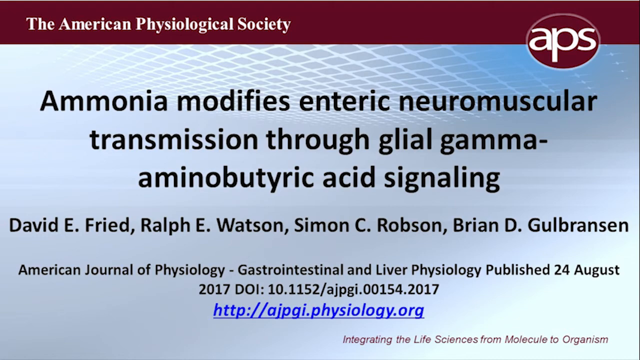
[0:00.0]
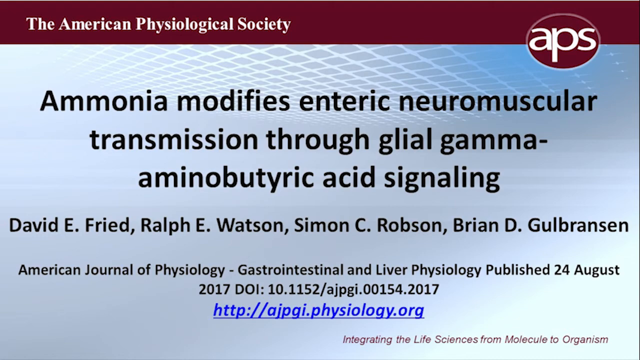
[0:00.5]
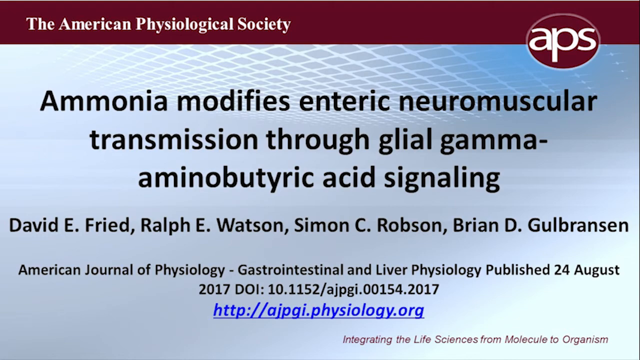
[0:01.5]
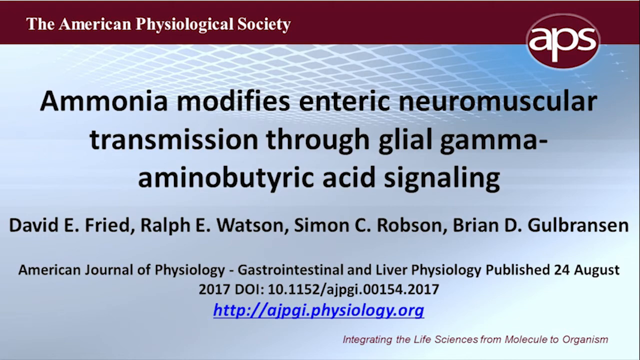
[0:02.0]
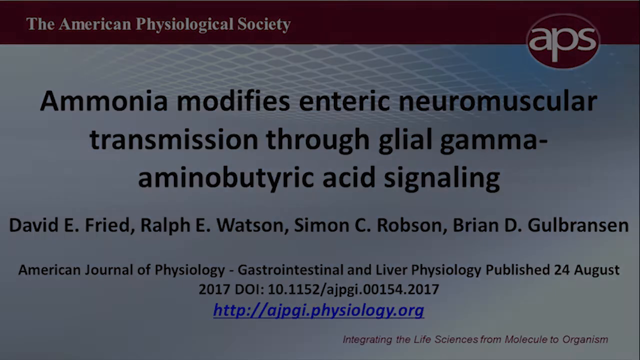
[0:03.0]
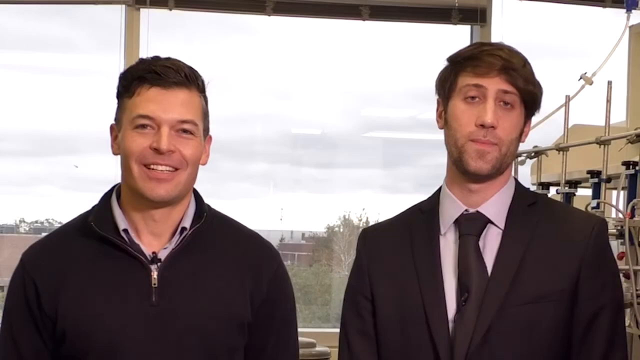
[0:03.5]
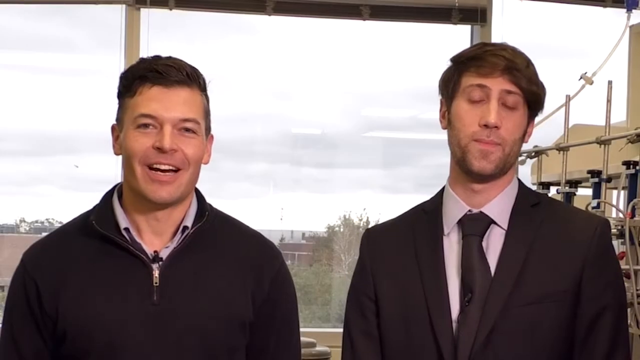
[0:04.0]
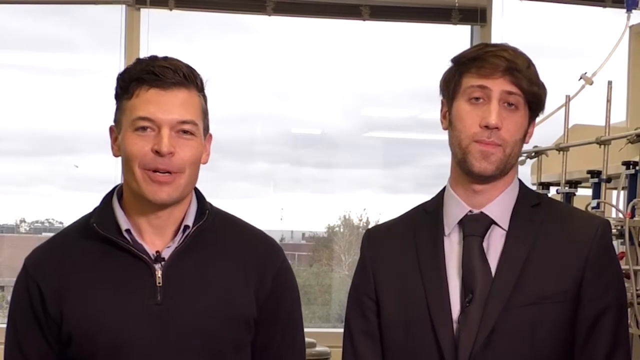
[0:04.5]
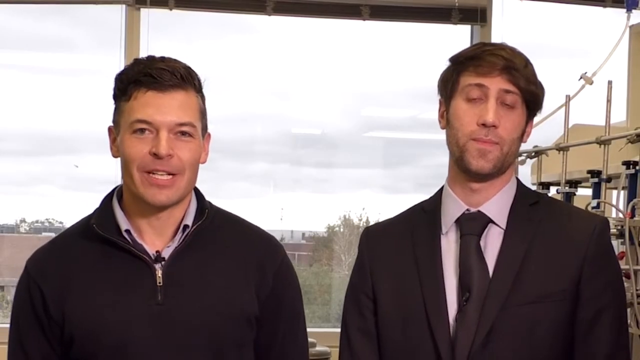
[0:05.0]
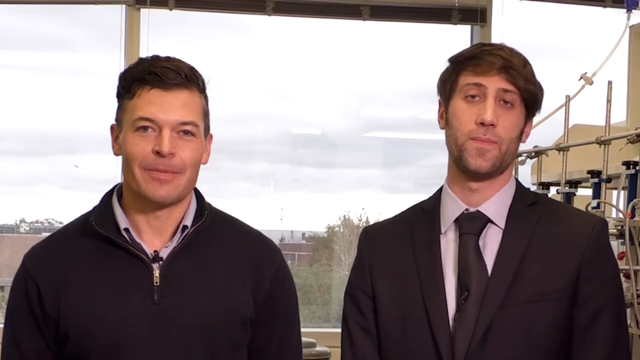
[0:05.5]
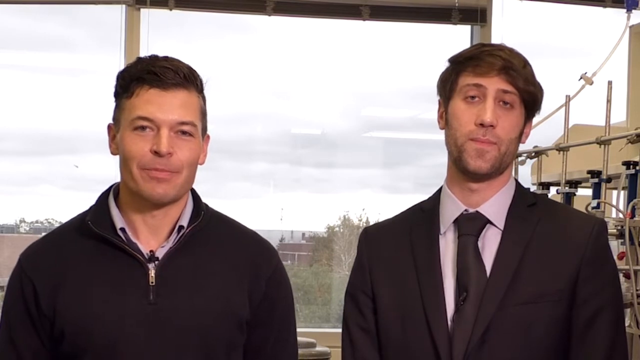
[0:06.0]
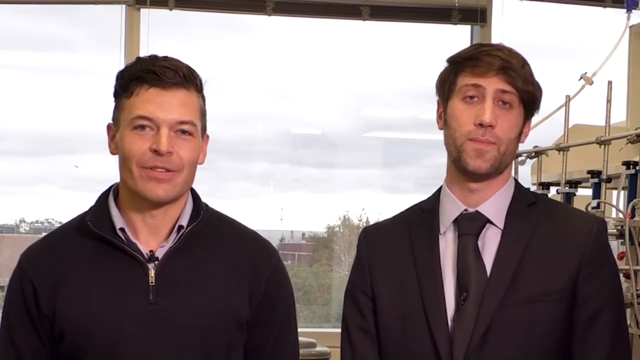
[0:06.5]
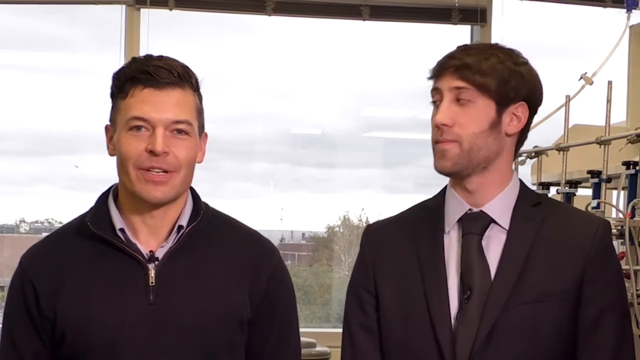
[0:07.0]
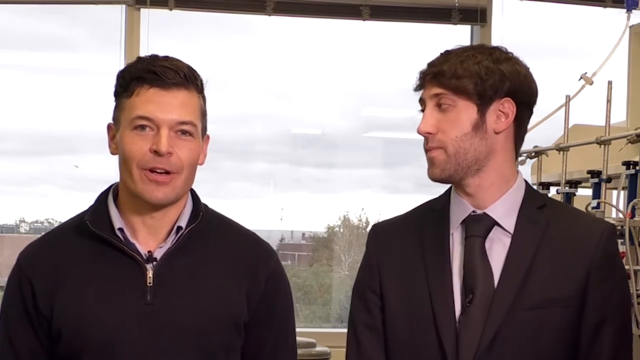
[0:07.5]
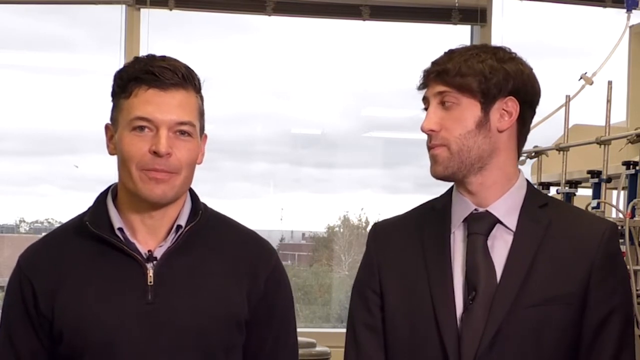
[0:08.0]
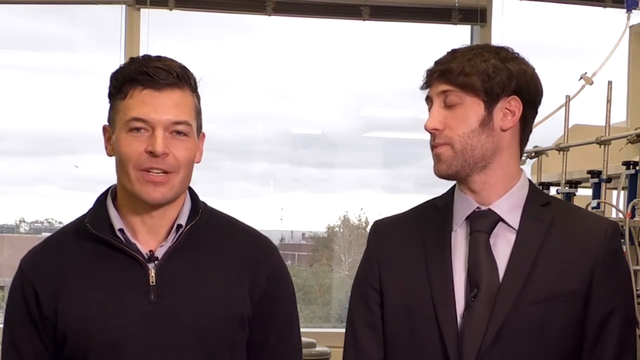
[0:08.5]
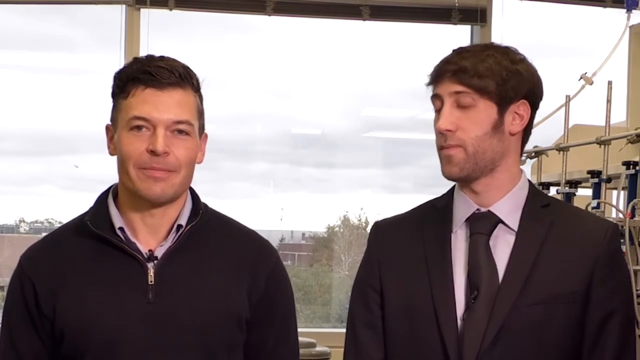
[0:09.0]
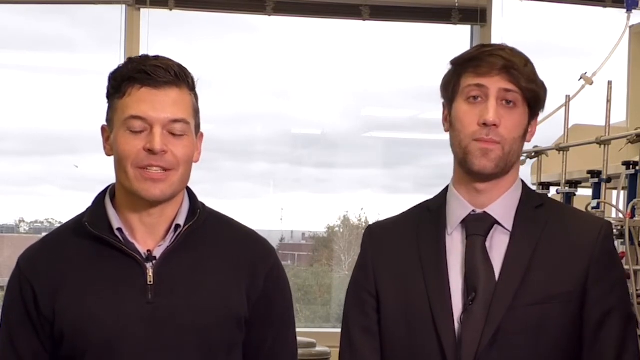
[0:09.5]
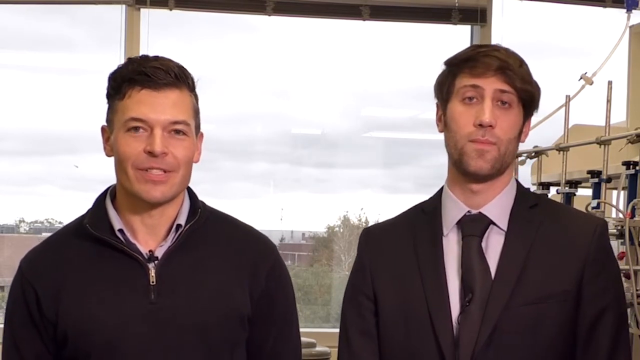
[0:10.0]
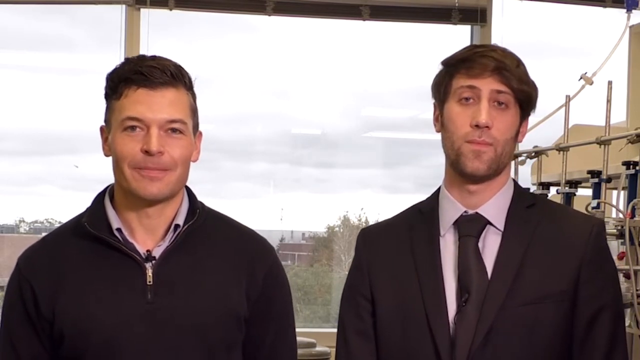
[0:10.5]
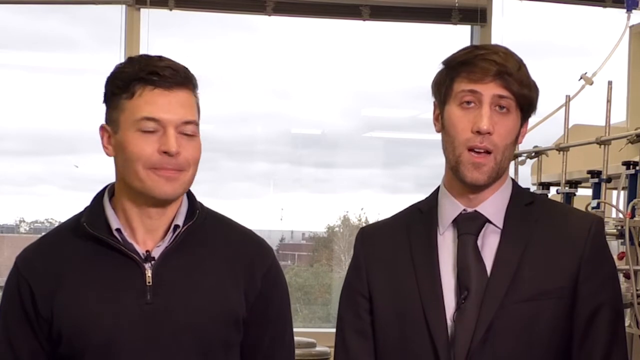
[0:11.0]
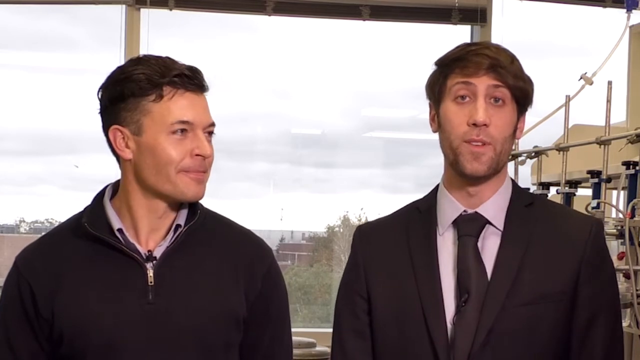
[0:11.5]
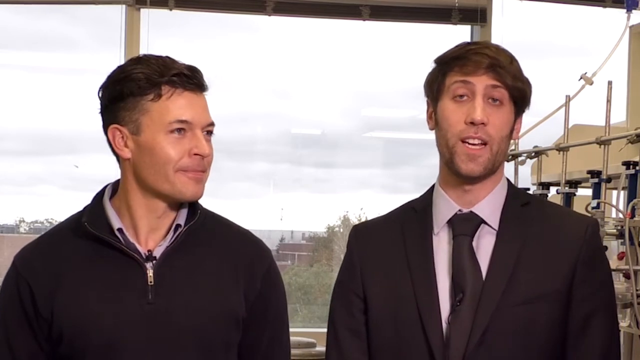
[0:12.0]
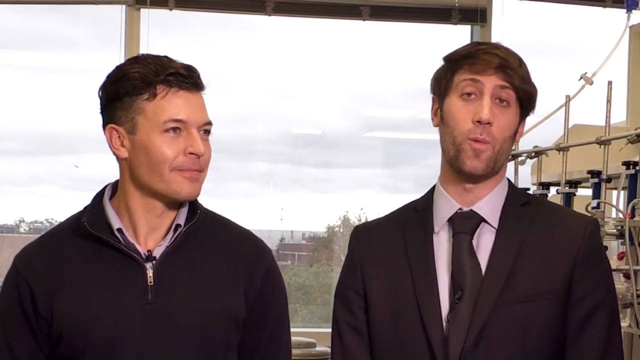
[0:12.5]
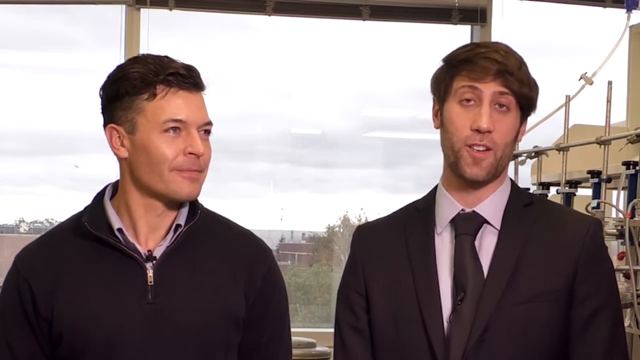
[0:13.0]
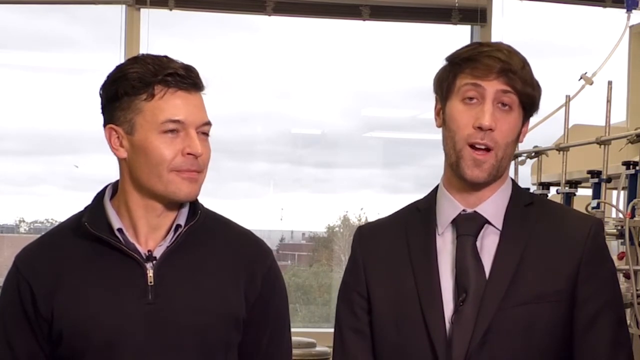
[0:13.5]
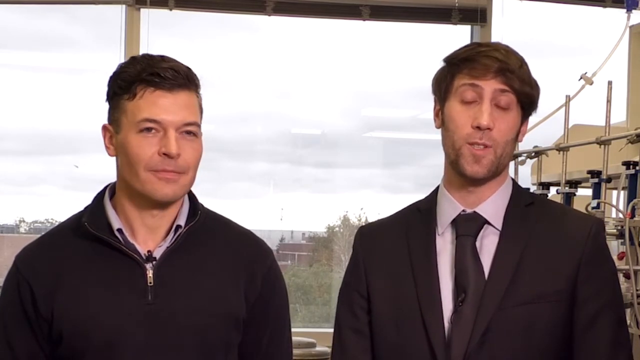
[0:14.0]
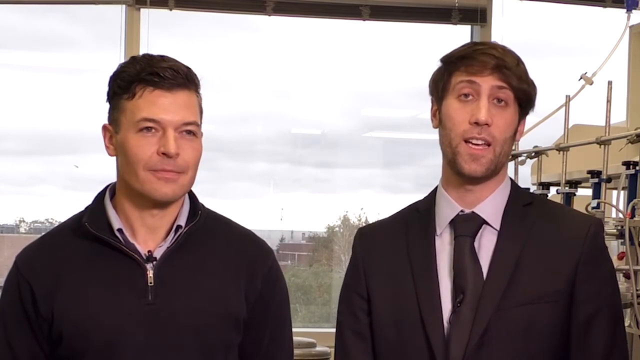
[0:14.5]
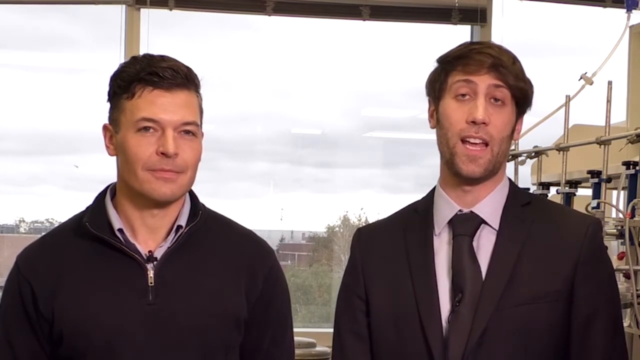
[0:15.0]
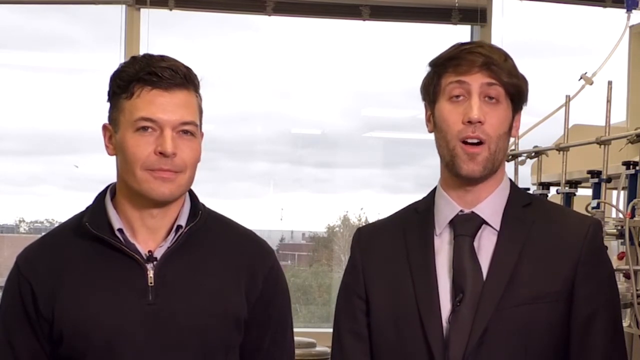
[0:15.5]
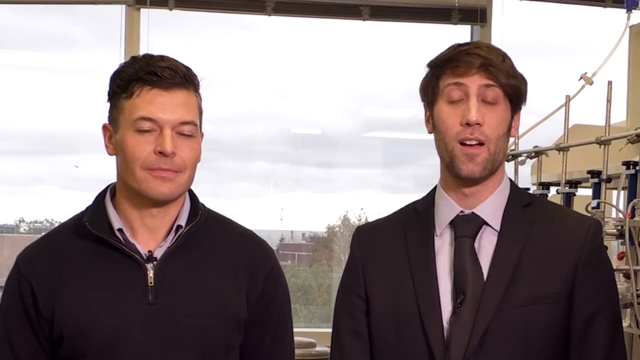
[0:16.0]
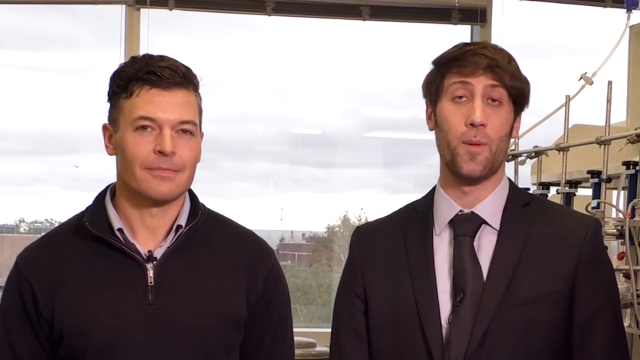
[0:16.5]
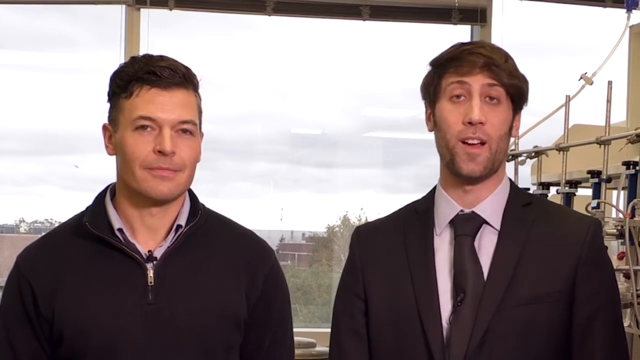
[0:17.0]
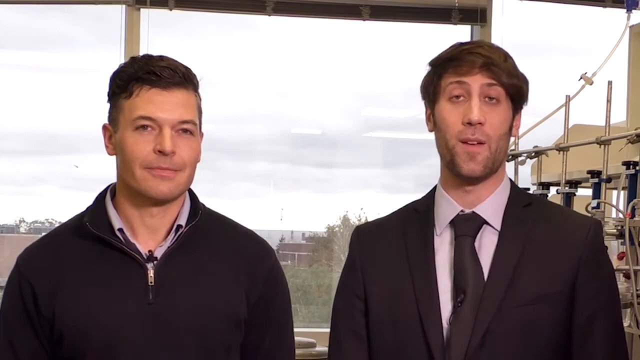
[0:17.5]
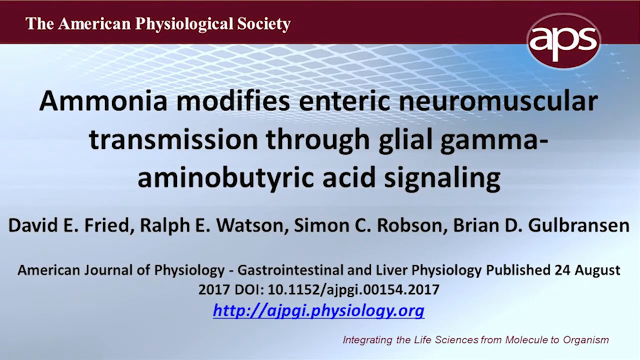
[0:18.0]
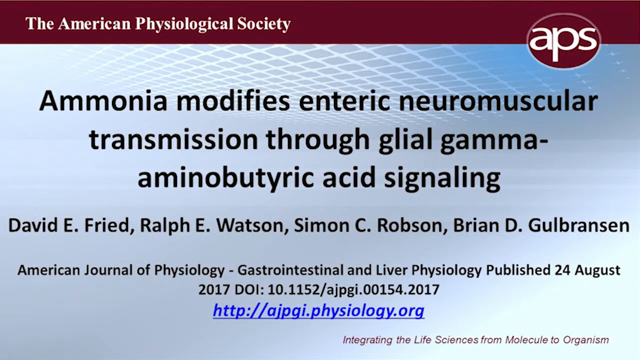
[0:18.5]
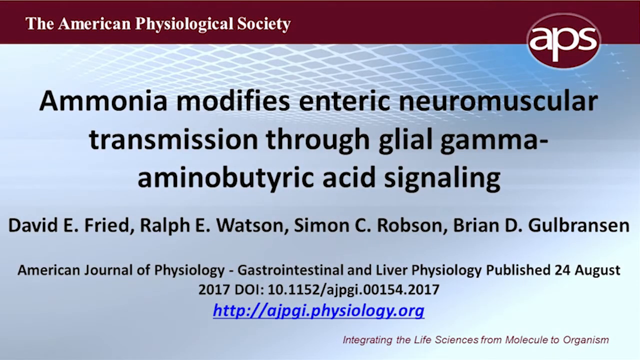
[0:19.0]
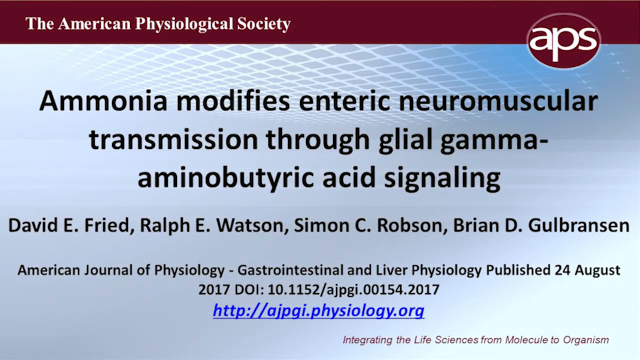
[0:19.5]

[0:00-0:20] The header page of the American Physiological Society shows the title "Ammonia Modifies Enteric Neuromuscular Transmission Through Glial Gamma Amino Butyric Acid Signalling." It is from the American Journal of Physiology Gastrointestinal and Liver Physiology, published the 24th of August 2017. The view switches to two men talking to the camera, standing next to each other in front of a large window. The man on the right wears a black suit and tie with a white shirt; the man on the left wears a black jumper with a zip and a shirt underneath it. The man on the right turns and looks at the other man, then begins to talk to the camera. The scientists involved are both fairly young, both white, and both have short dark hair.